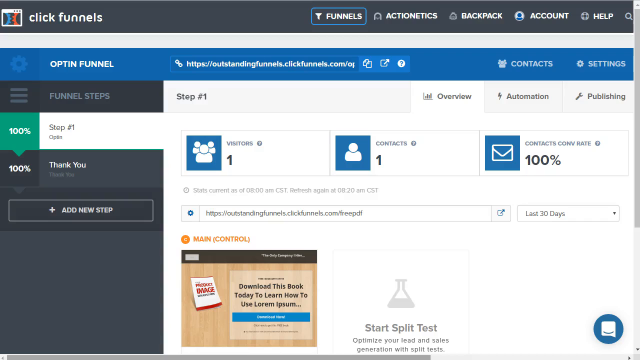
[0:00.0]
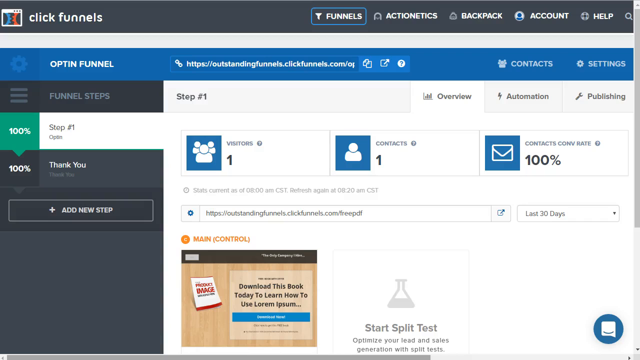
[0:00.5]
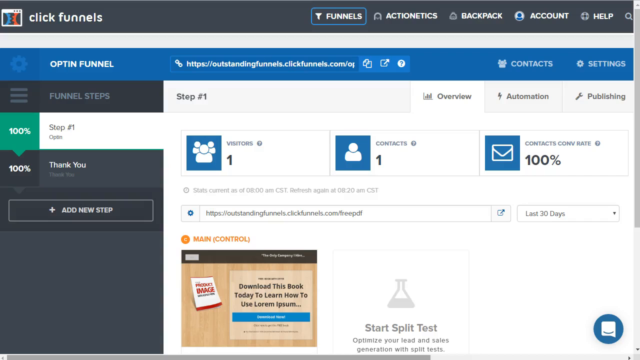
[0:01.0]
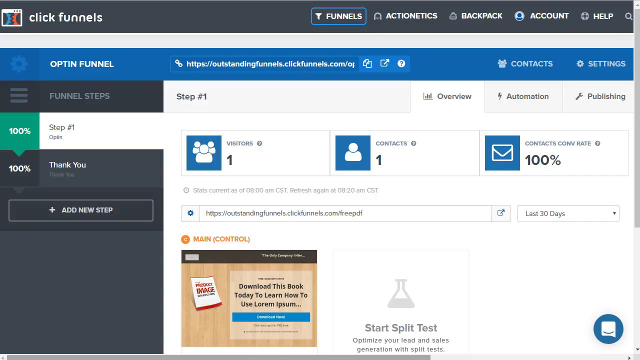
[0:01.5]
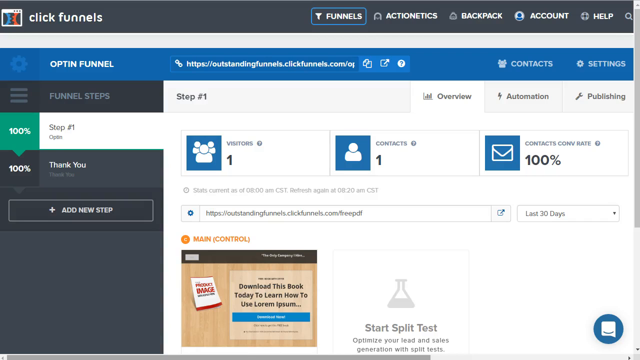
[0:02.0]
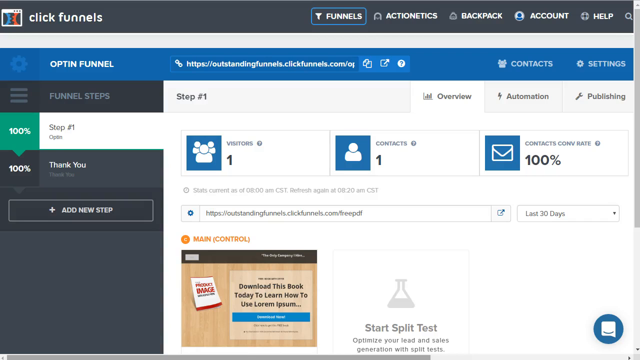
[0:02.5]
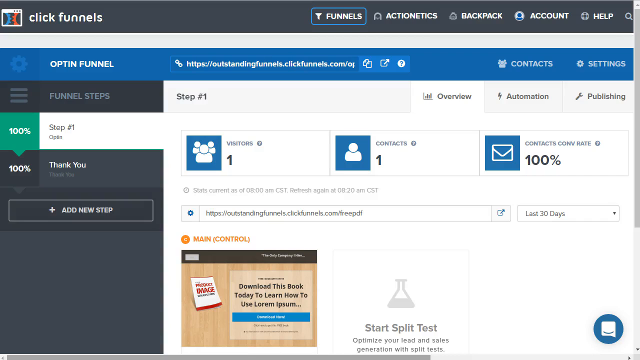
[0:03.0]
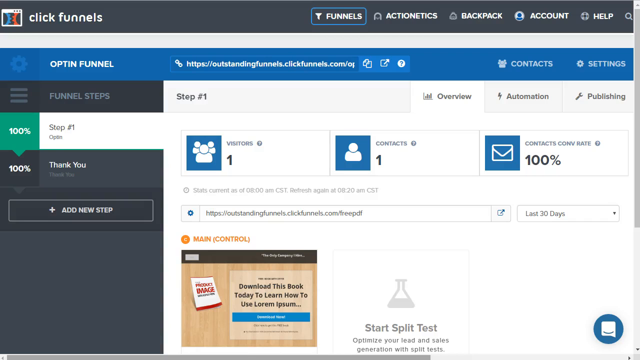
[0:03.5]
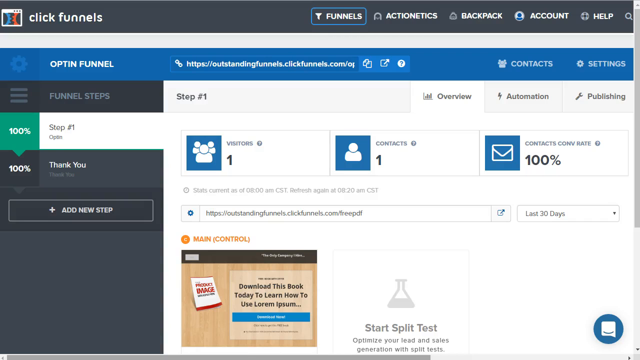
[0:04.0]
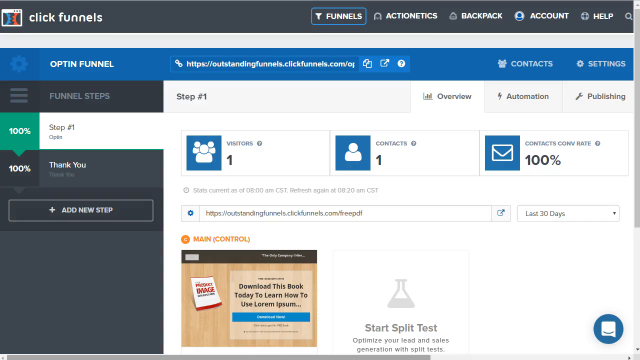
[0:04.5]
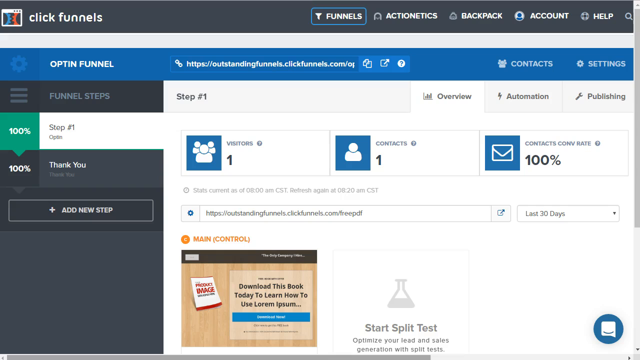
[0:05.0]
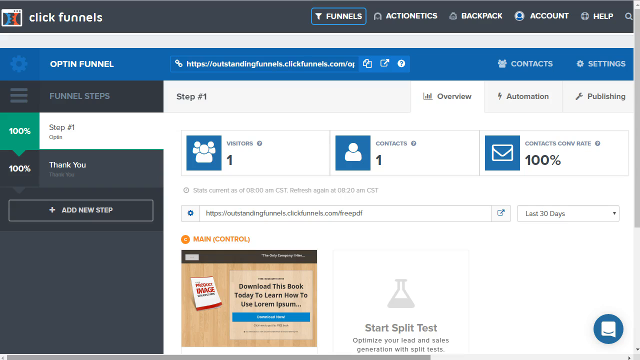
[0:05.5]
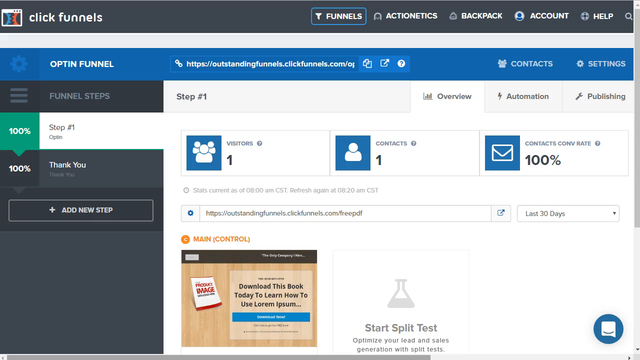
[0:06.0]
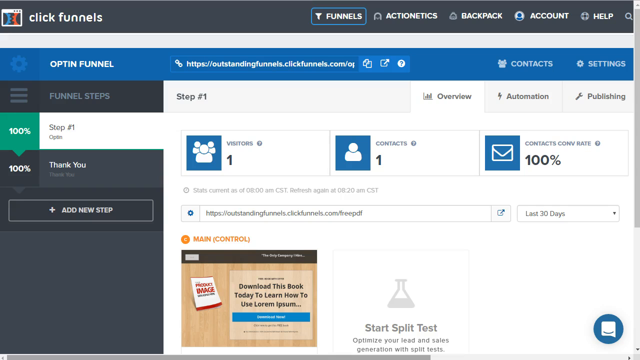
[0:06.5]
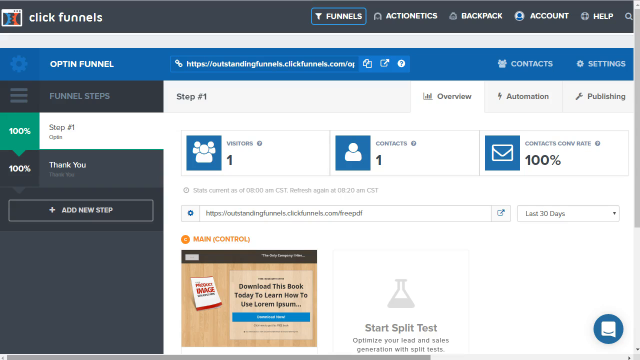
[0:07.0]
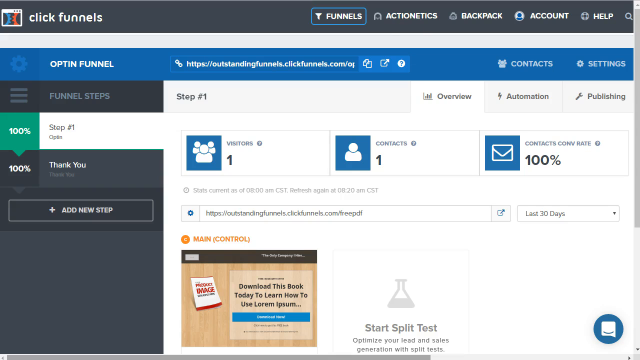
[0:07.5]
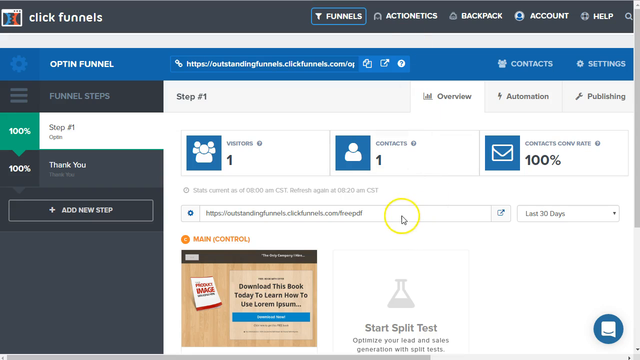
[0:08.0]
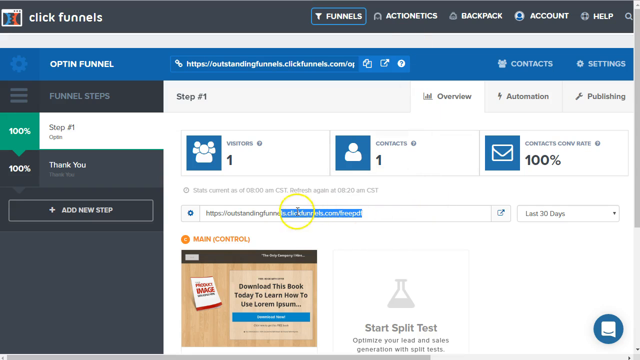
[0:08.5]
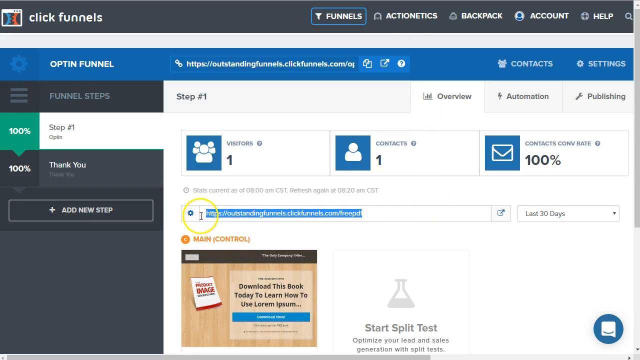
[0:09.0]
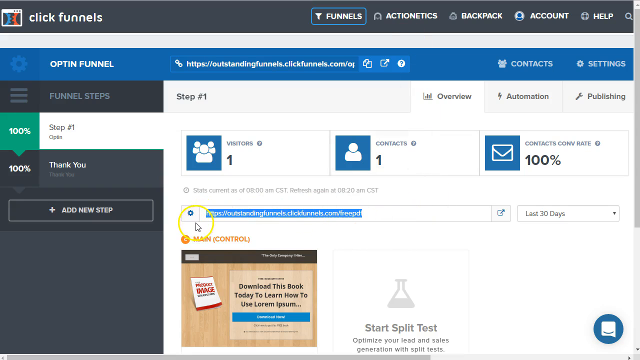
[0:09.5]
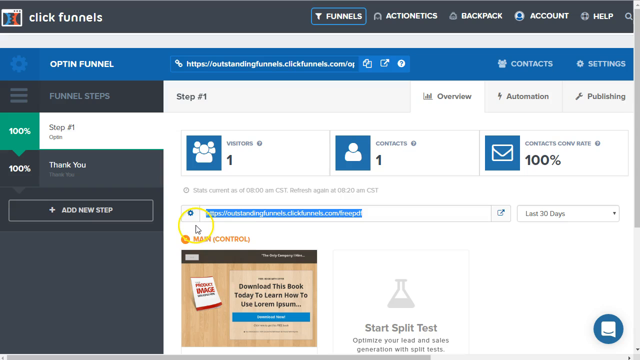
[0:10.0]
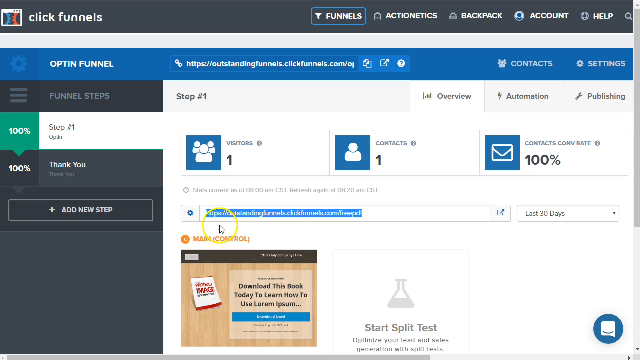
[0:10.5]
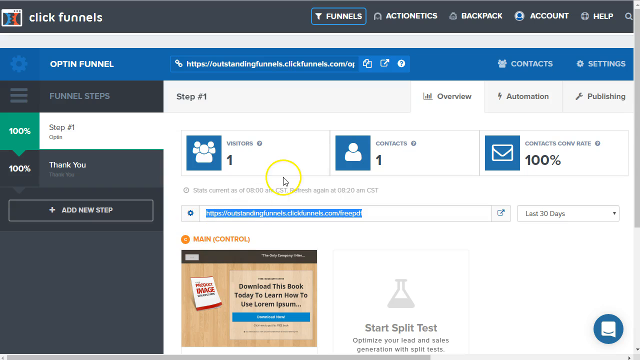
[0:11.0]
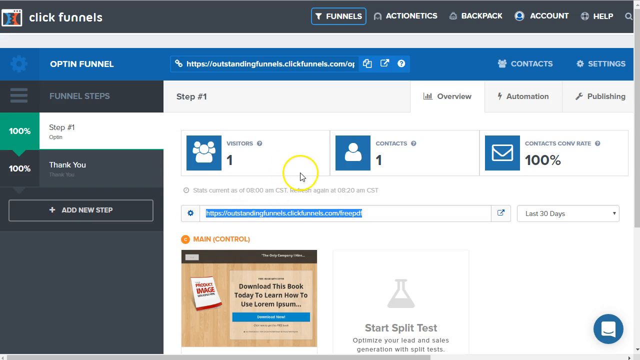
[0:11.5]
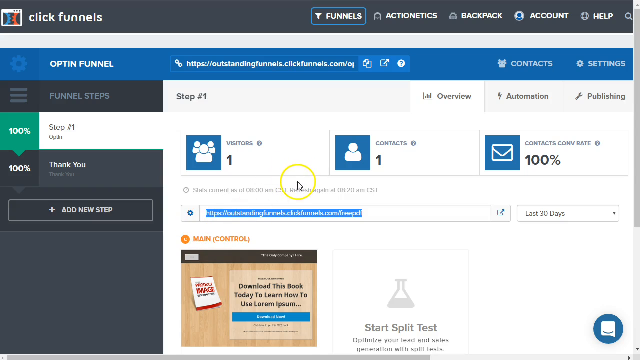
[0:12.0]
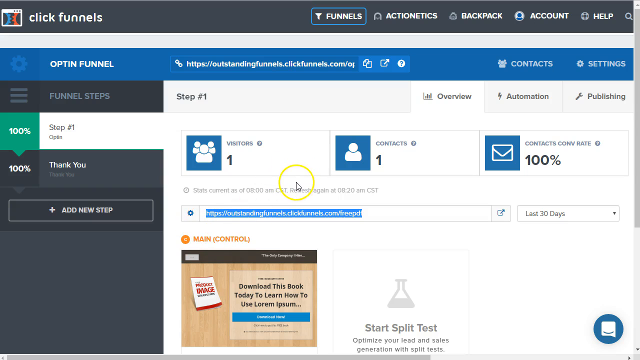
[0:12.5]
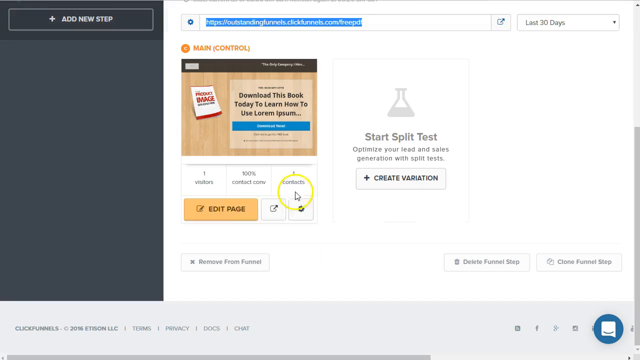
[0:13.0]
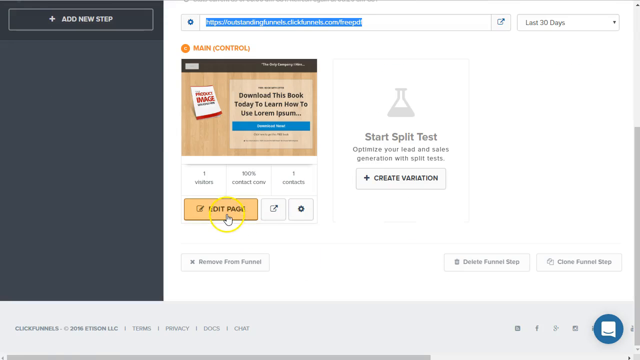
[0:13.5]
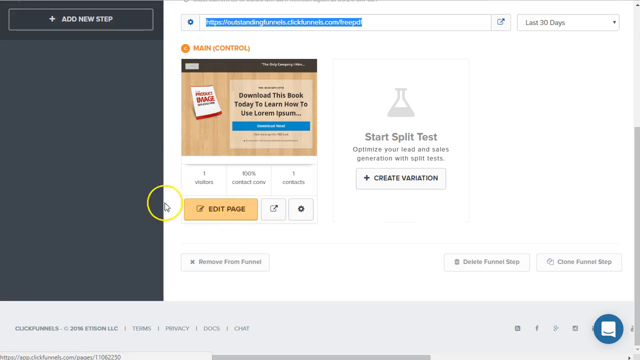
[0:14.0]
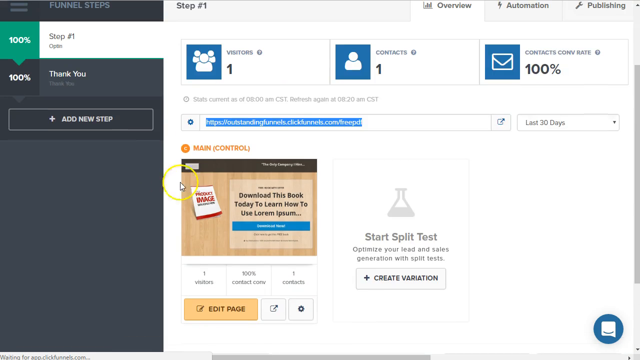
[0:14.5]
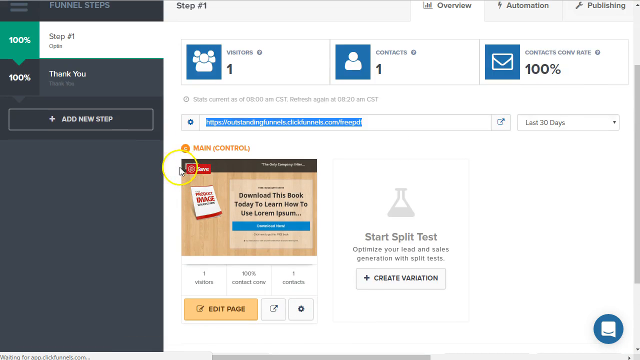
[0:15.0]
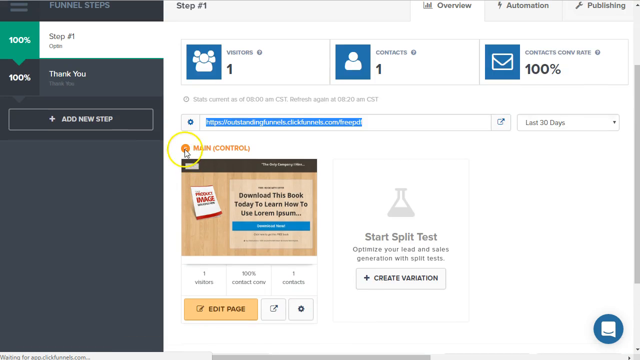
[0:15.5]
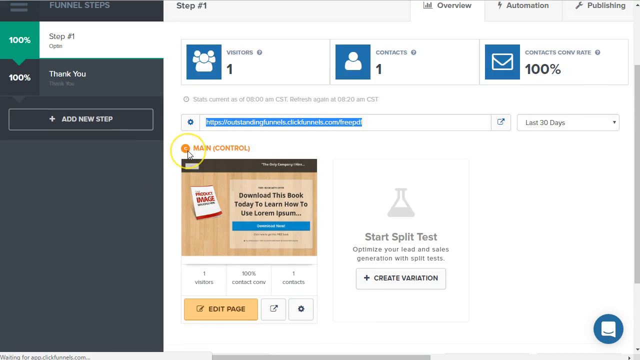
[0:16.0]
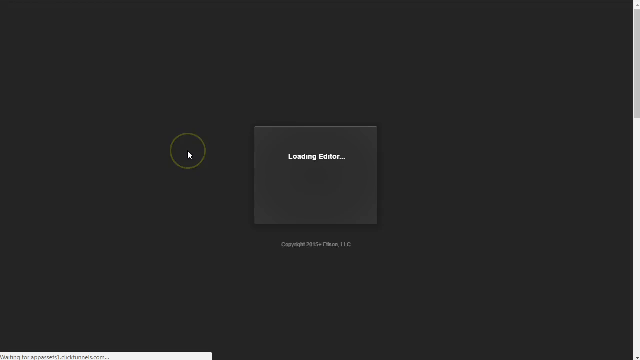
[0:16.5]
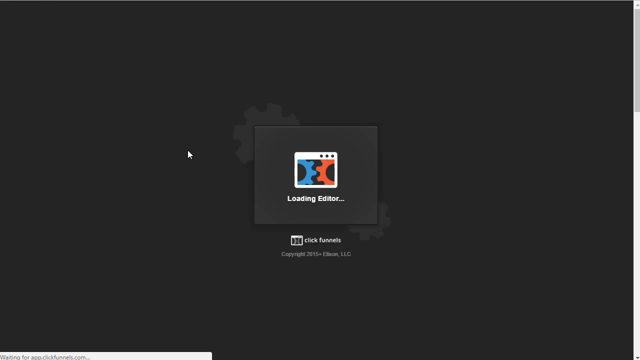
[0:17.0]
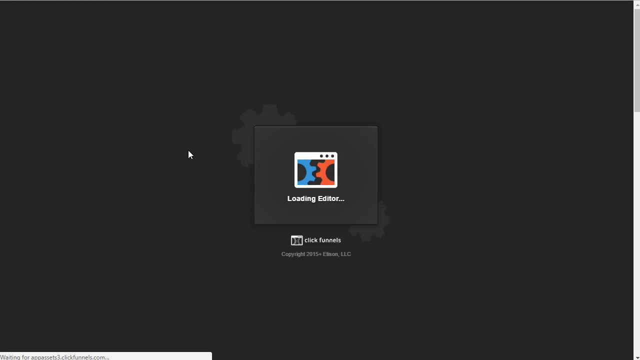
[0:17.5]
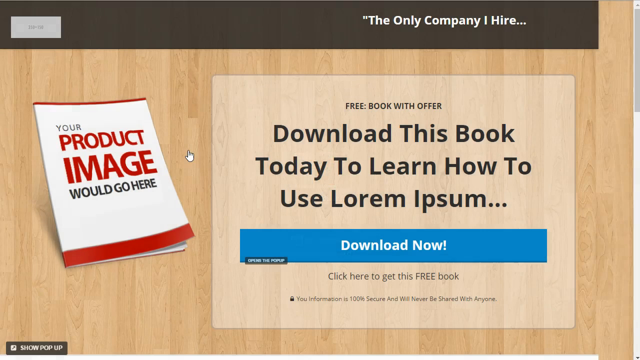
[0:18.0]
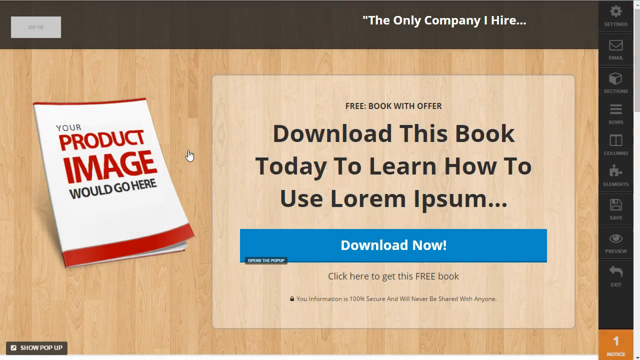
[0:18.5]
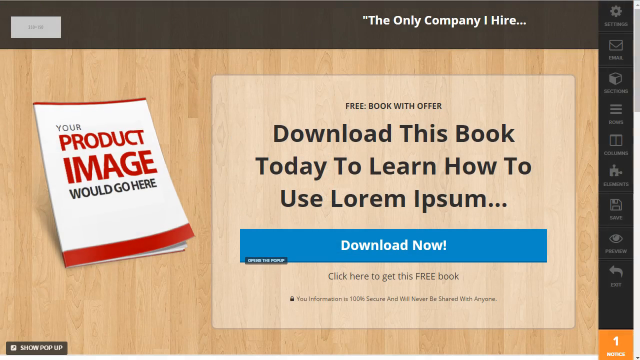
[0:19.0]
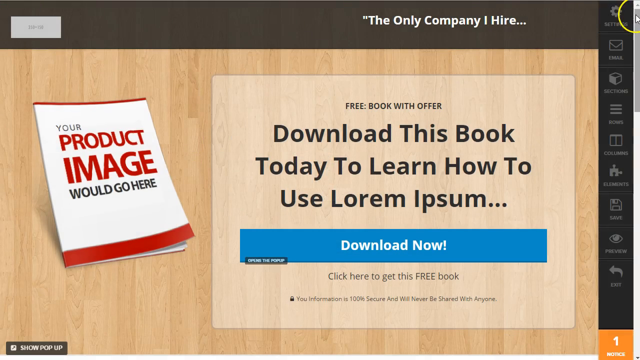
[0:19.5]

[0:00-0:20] A website appears in the video, with many selections on it. An opt-in funnel has a blue border along the top, and the page shows steps on what to do. One area reads "your product image would go here." The page seems to be a blueprint showing people what they can do with their company. It has context and settings. At the very top it says "click funnels," and there is a box with their icon in it. Selections along the very top read "funnels, action, netx, backpack, account, and help." Step one shows 100%, apparently meaning it is completed, and a step that says "thank you" also shows 100%. There is an add bar for adding a new step. The steps are detailed out, showing what to do. The page says "contacts rate 100%" and has a main control. It looks instructional.